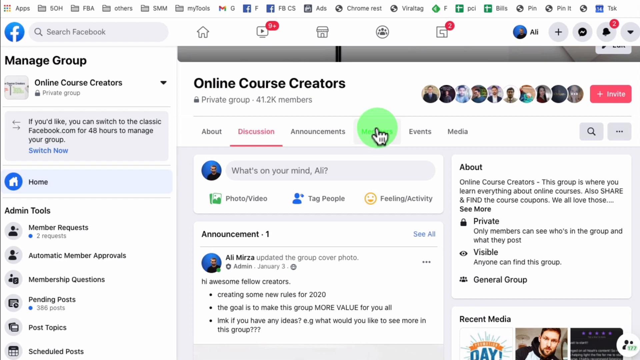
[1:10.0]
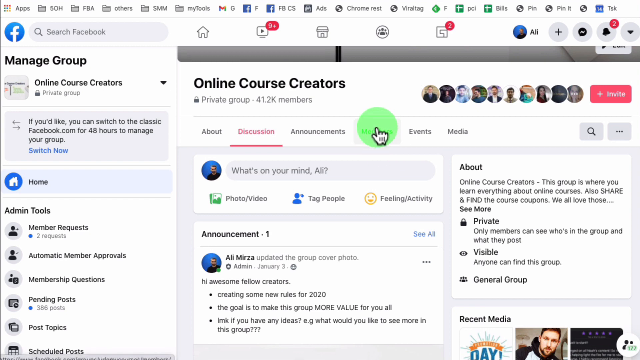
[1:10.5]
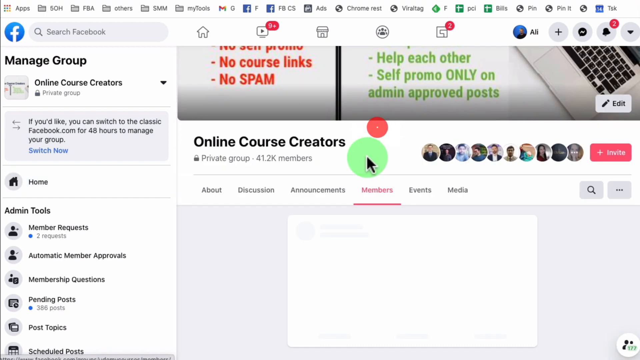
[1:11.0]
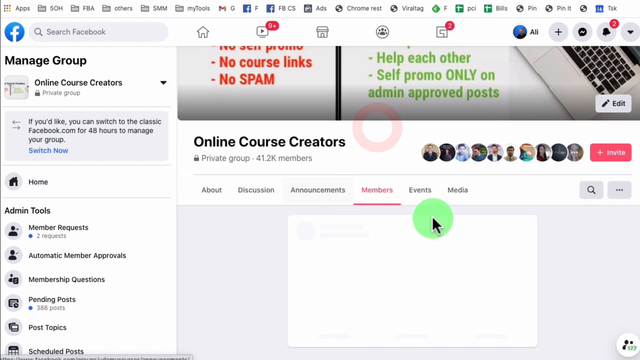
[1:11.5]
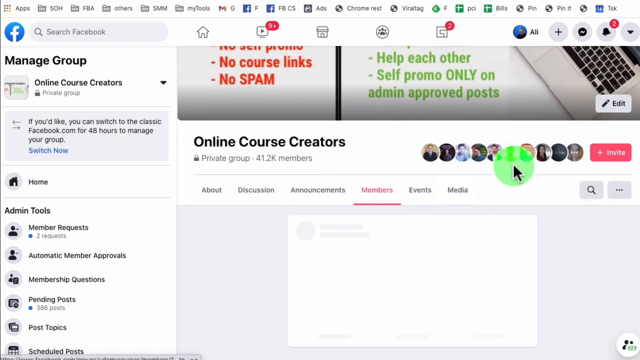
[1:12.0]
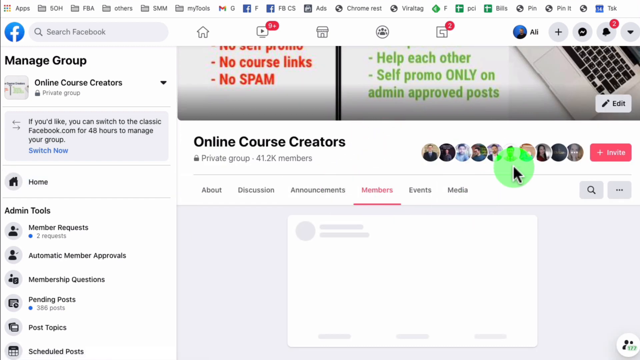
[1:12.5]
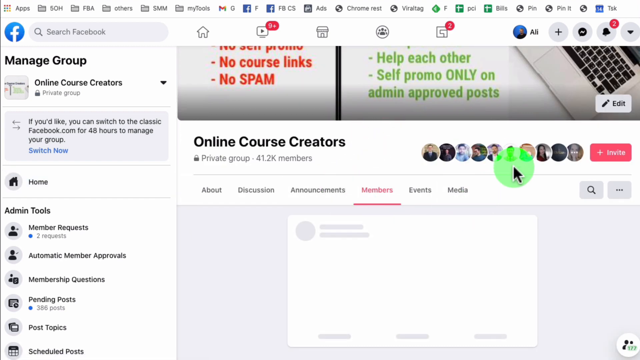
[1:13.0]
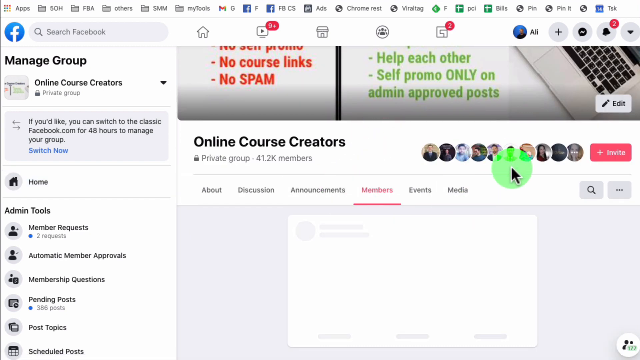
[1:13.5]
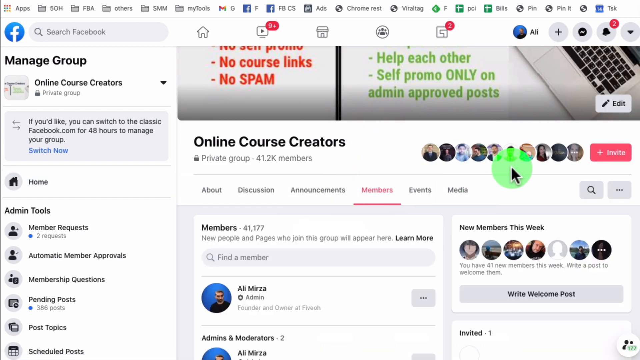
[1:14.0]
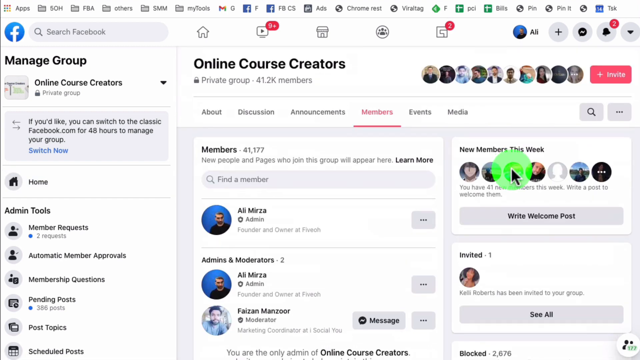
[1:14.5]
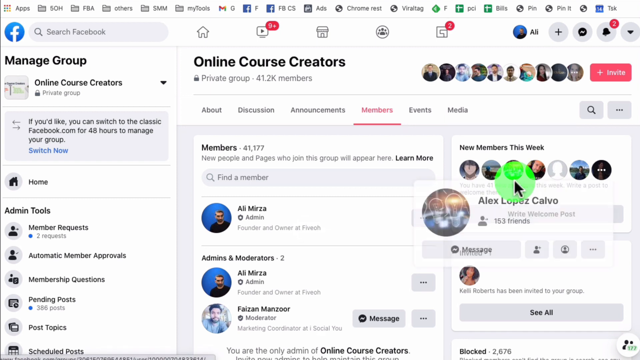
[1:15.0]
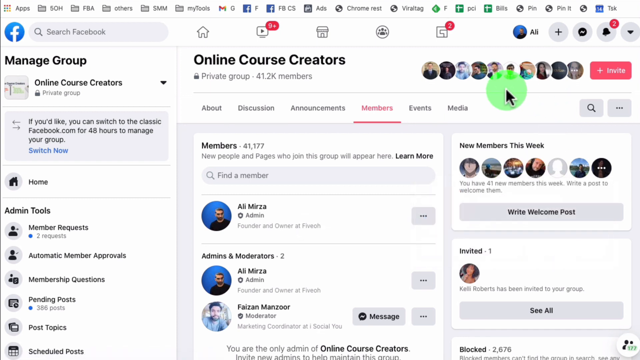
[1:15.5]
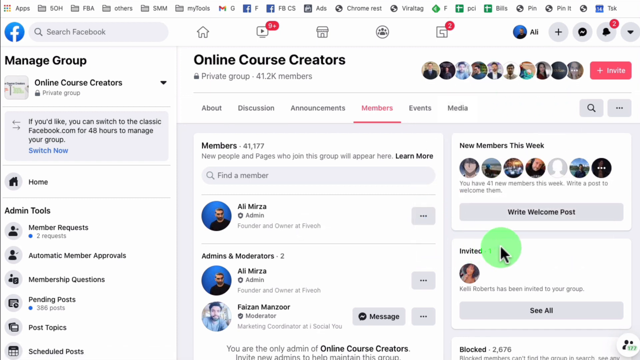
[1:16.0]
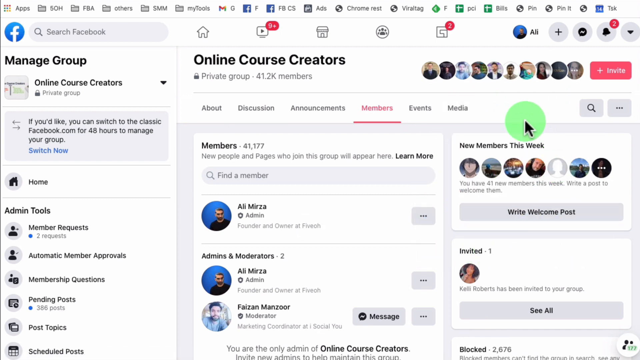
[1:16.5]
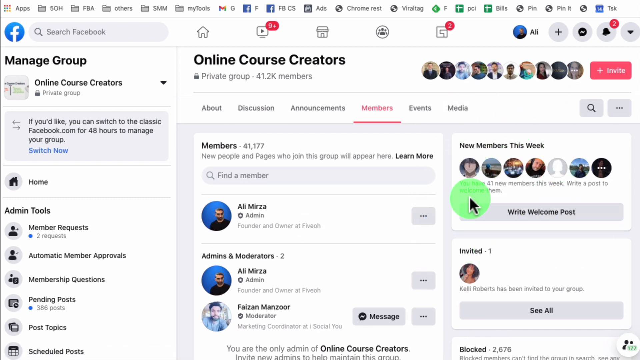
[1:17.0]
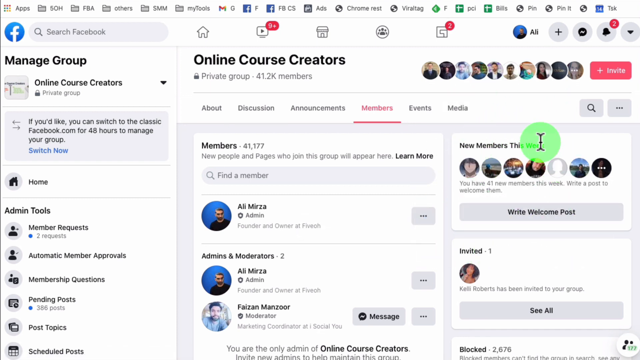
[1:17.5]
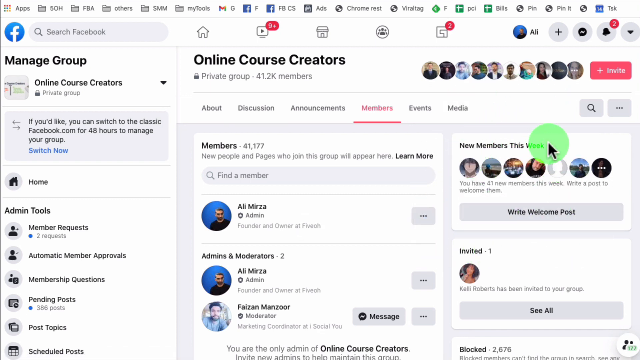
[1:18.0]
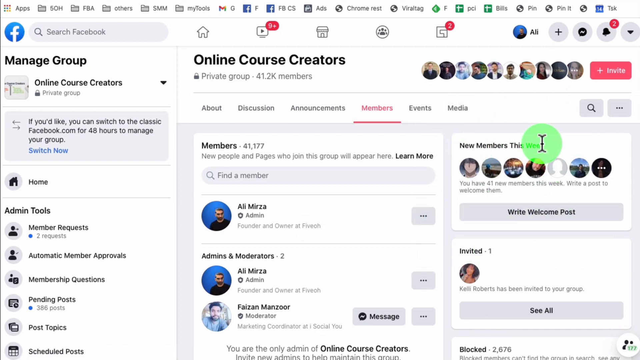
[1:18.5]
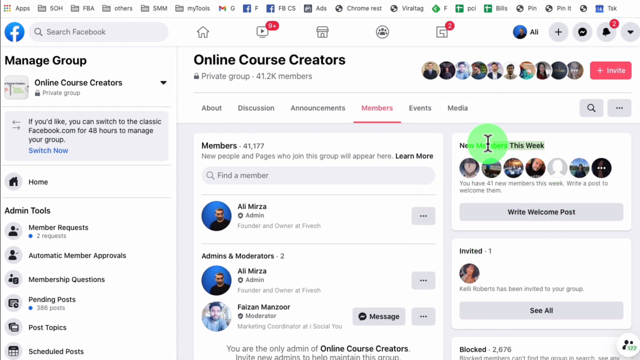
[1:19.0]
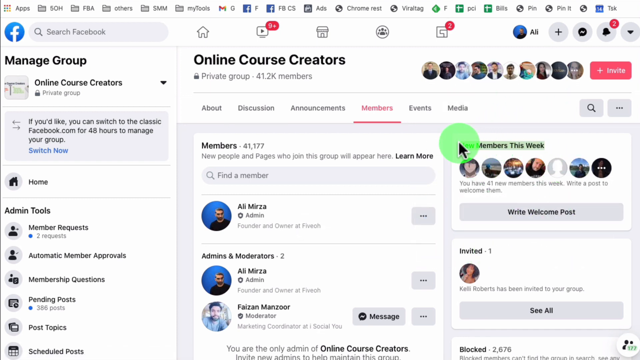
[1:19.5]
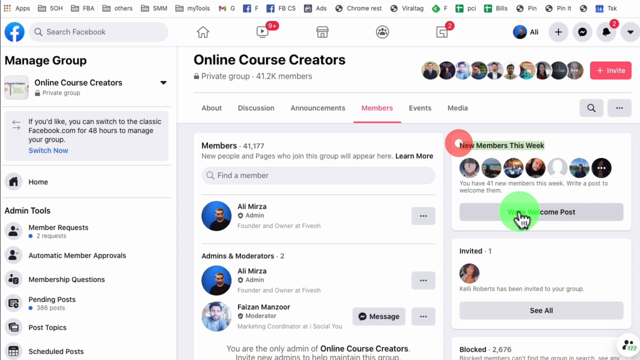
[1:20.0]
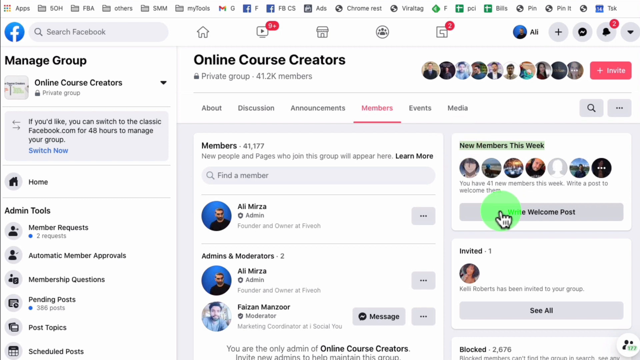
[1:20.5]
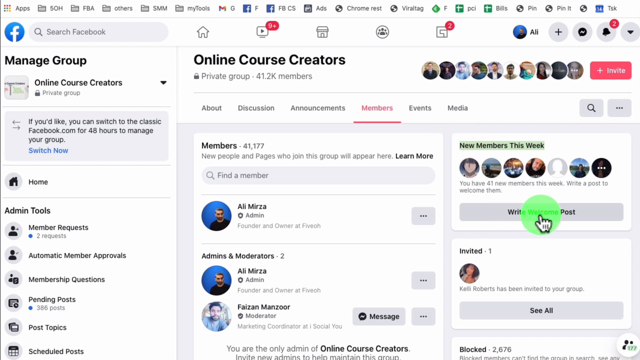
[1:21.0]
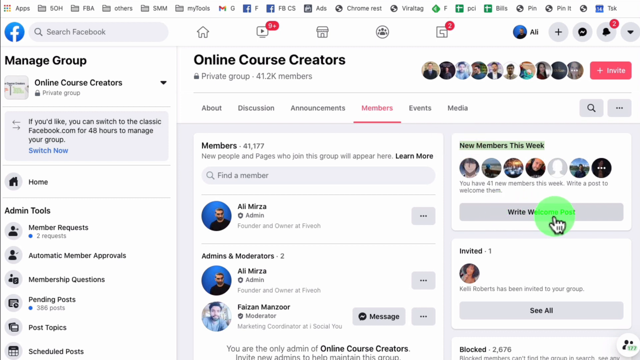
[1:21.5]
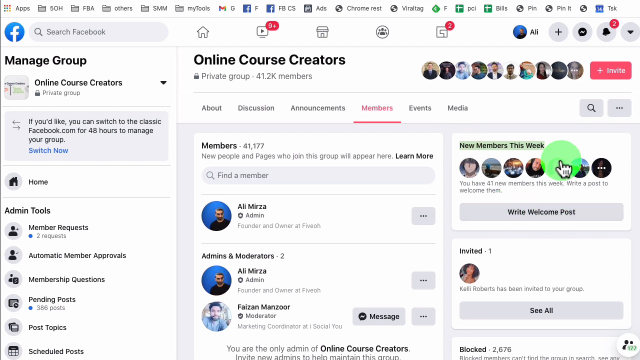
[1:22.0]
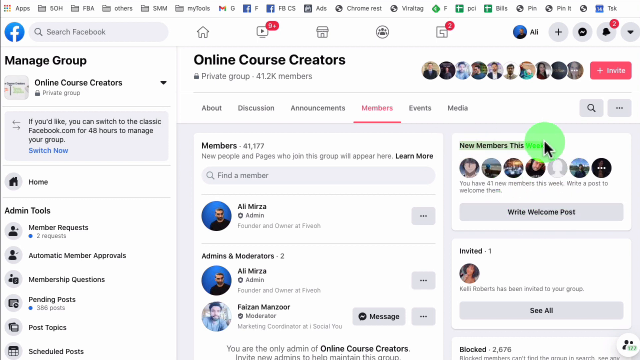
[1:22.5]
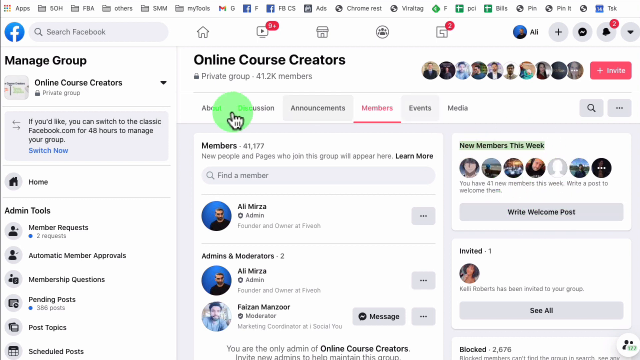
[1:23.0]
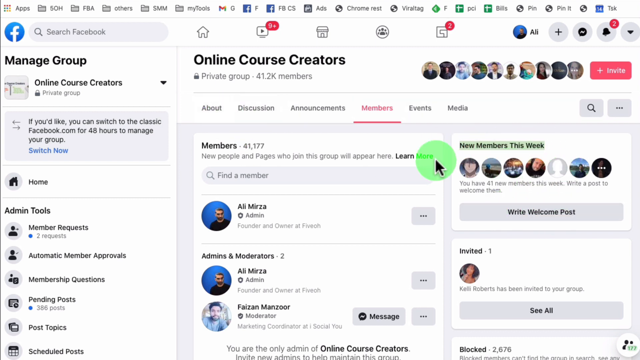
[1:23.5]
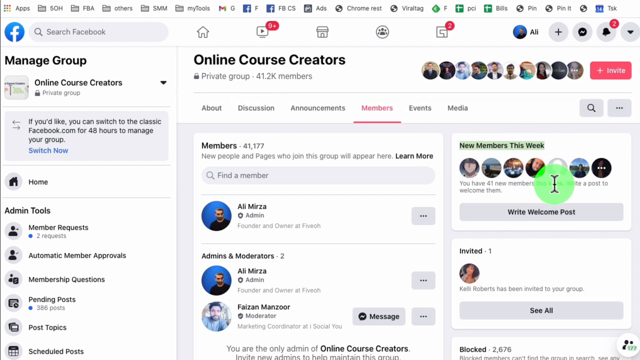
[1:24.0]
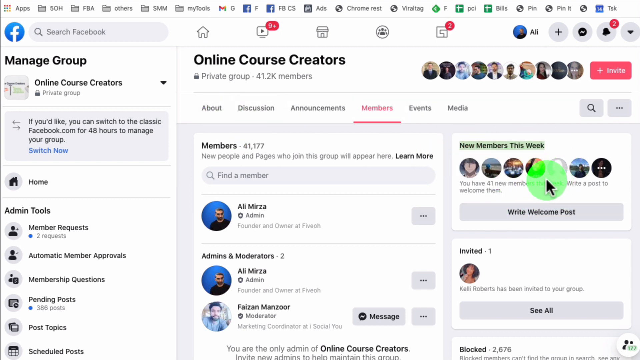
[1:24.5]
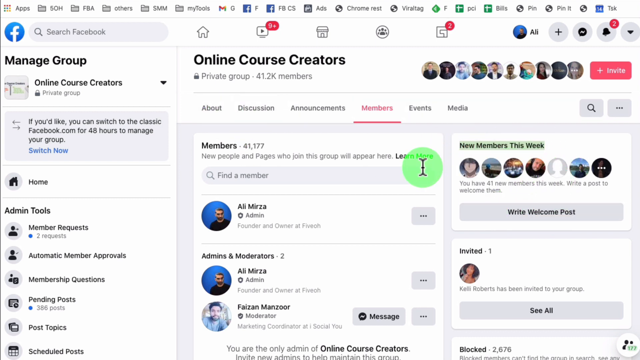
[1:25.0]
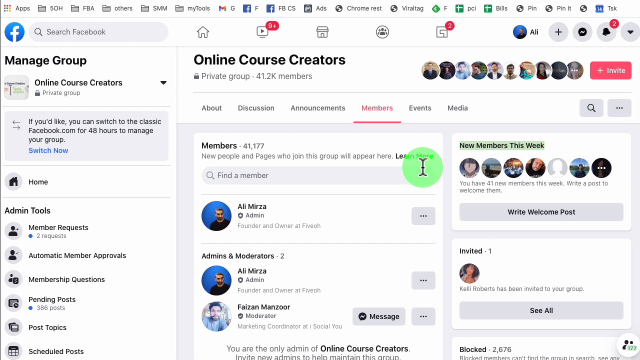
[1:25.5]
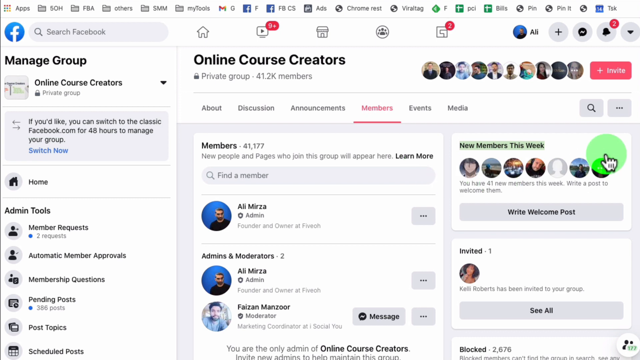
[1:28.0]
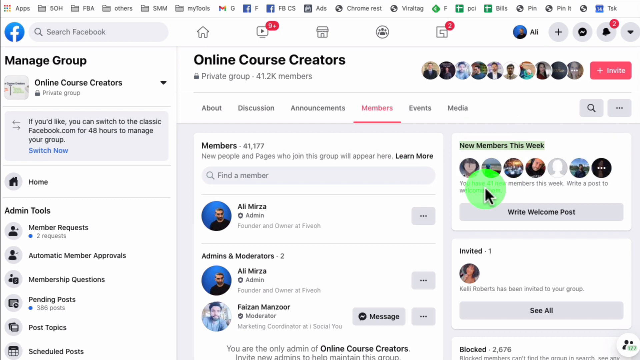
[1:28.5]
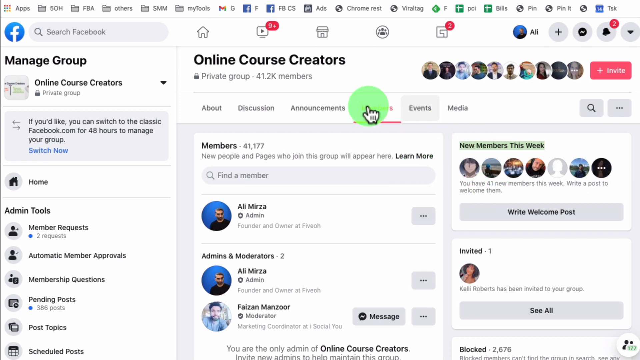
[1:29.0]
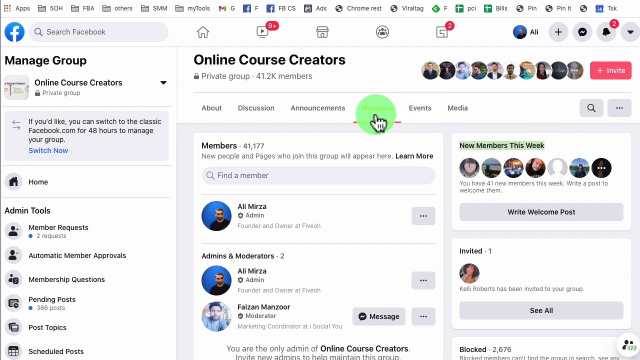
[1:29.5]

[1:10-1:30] The page reads "course creators", and the mouse hovers over the new members this week. No members were approved this week. The total number of members is shown as 41,777, and also read as 41,177. On the left is written "manage the group", and on the right are people who recently joined the group. There is also an about page with information about the group.